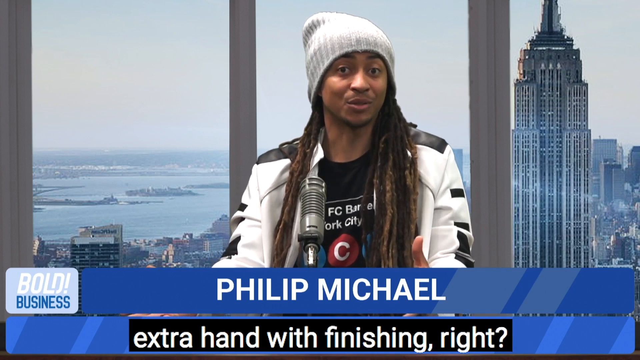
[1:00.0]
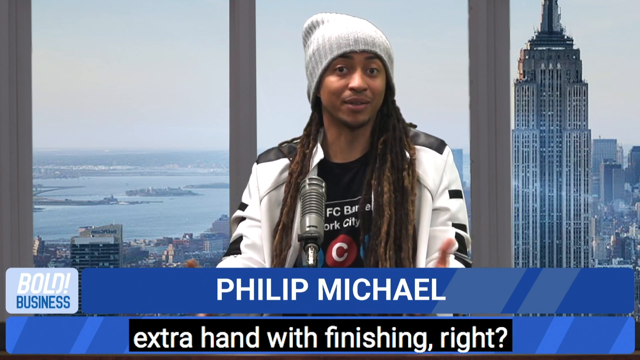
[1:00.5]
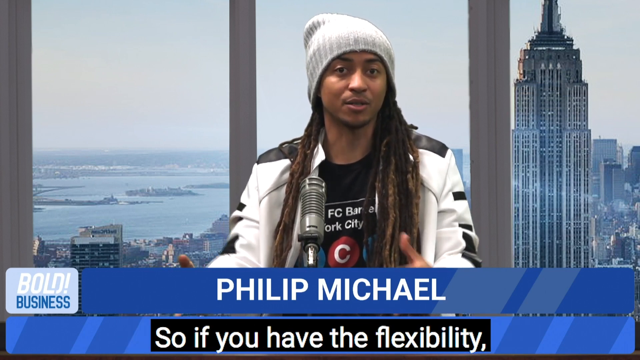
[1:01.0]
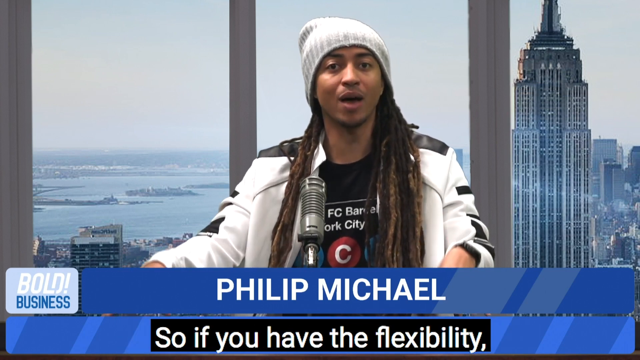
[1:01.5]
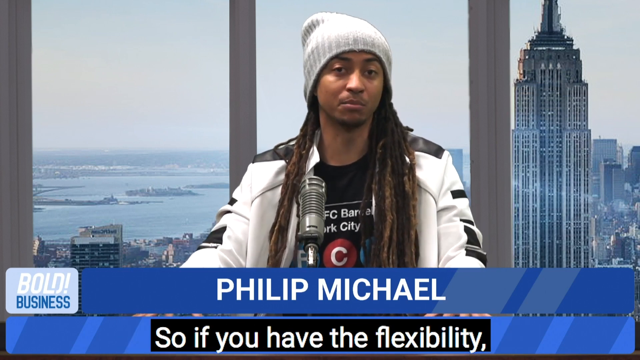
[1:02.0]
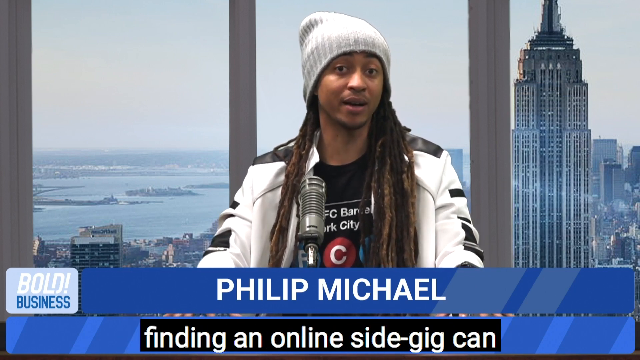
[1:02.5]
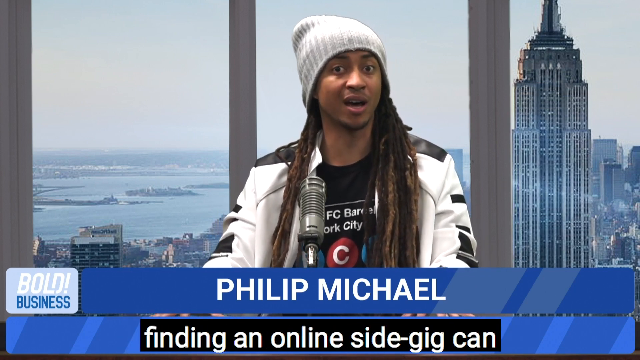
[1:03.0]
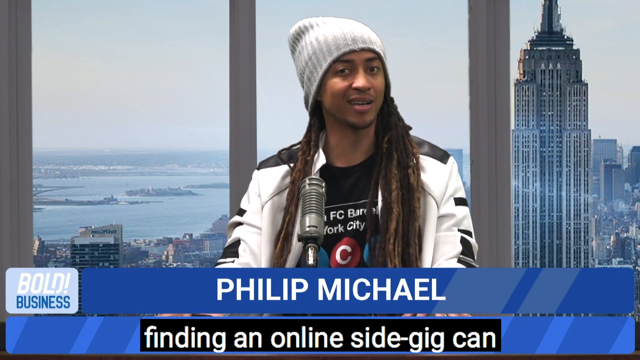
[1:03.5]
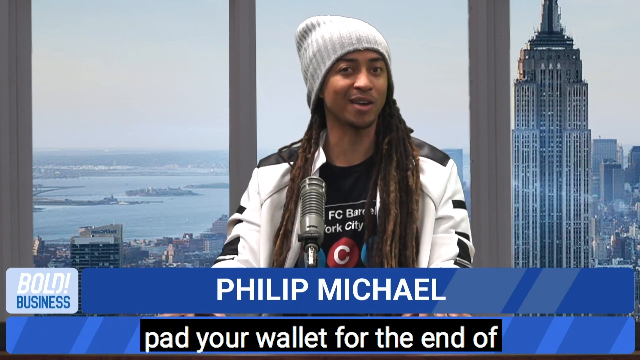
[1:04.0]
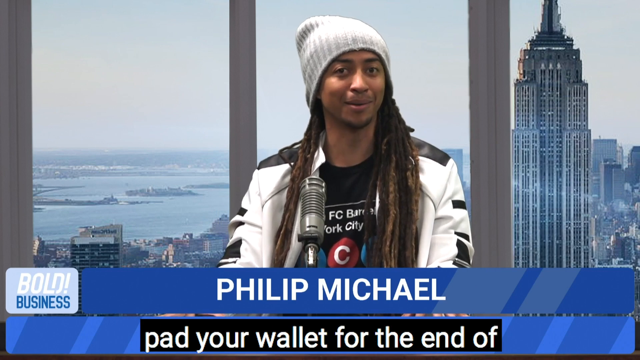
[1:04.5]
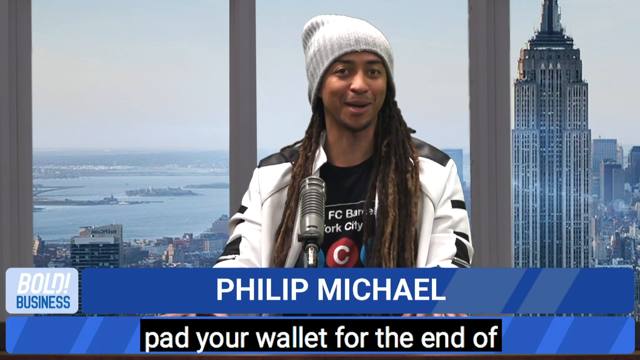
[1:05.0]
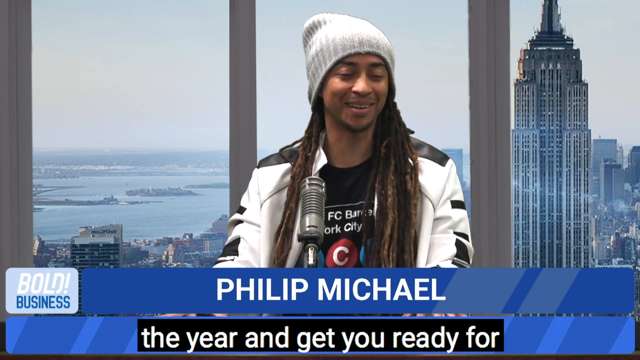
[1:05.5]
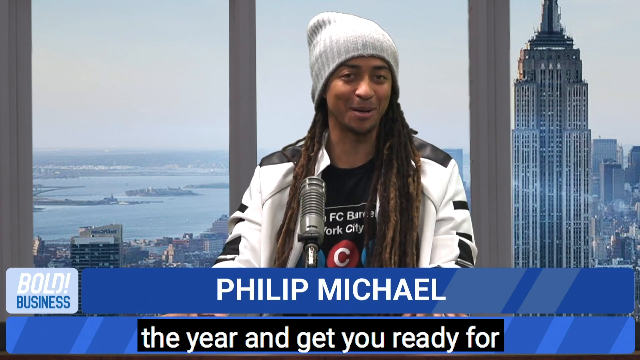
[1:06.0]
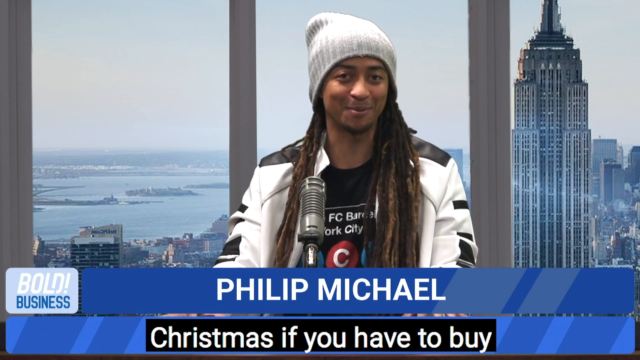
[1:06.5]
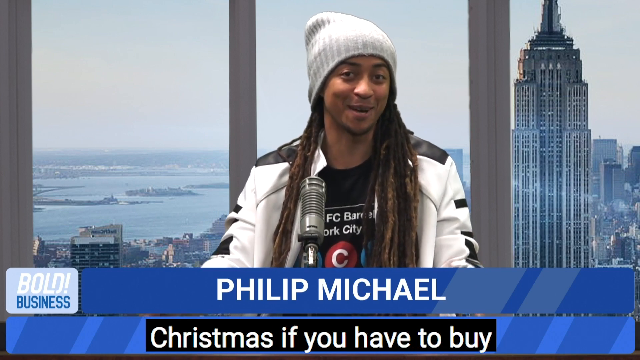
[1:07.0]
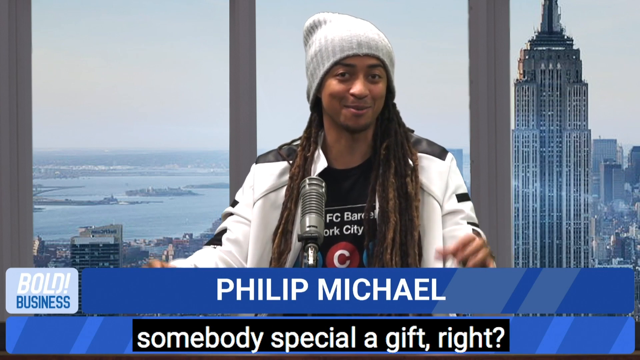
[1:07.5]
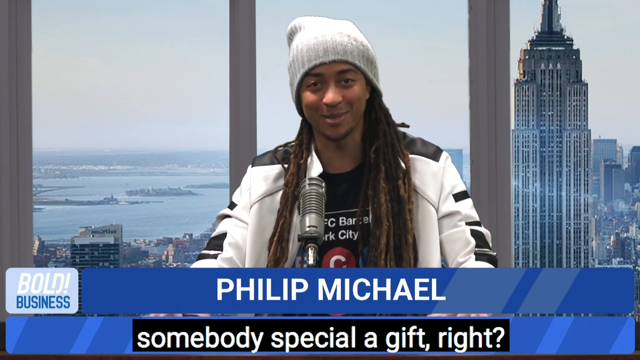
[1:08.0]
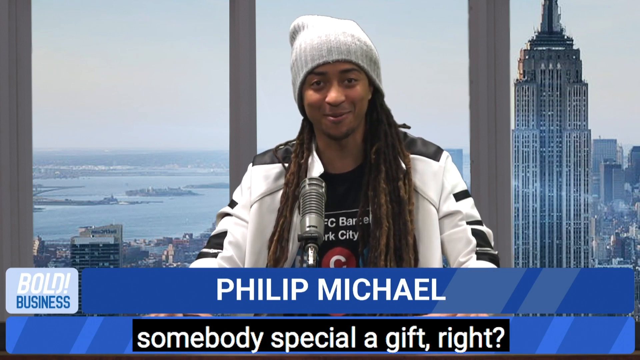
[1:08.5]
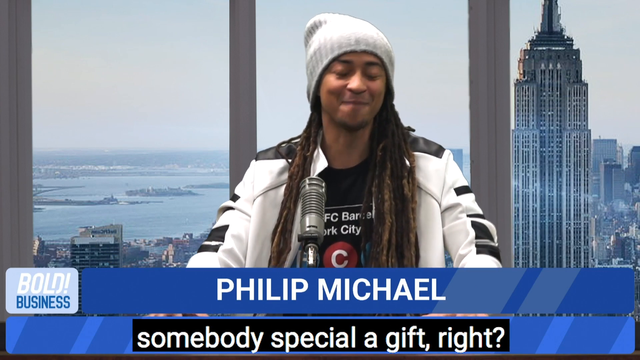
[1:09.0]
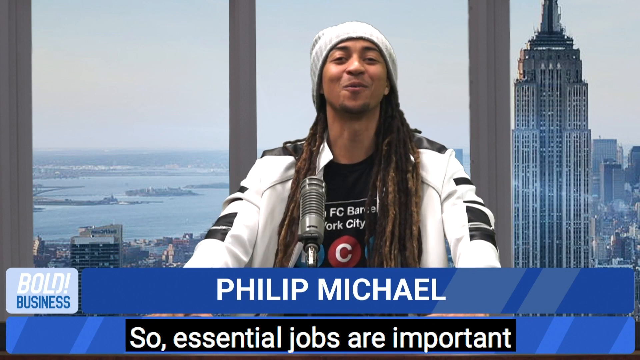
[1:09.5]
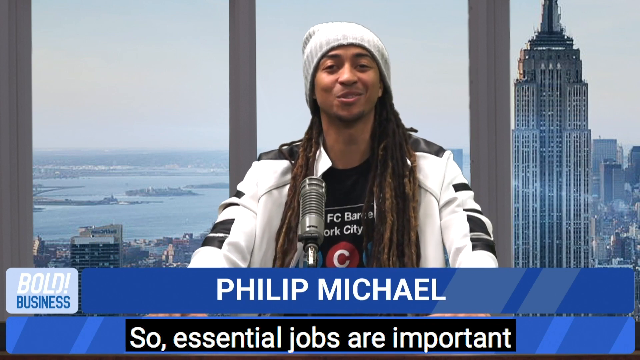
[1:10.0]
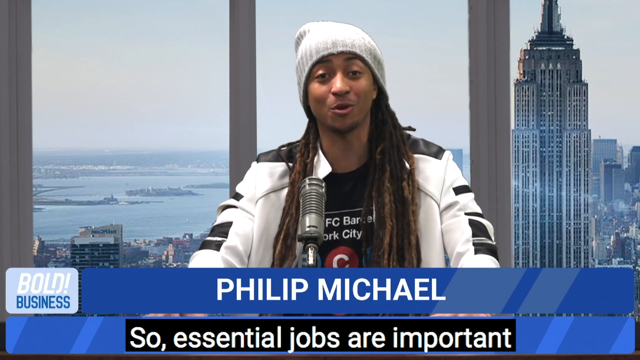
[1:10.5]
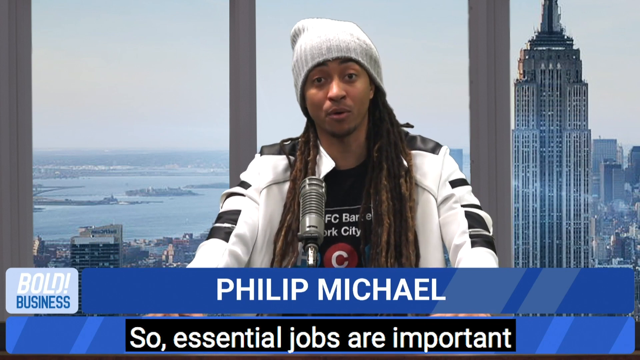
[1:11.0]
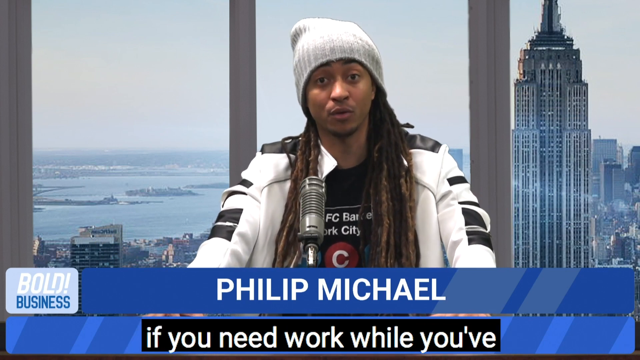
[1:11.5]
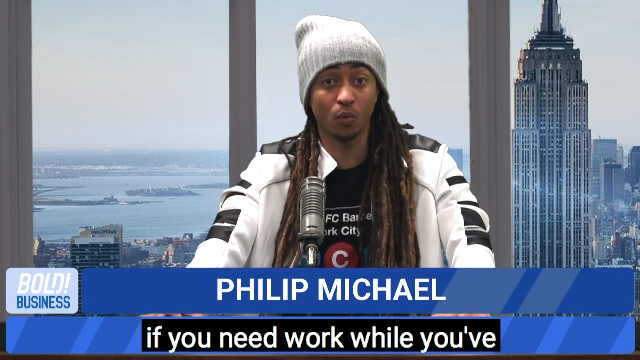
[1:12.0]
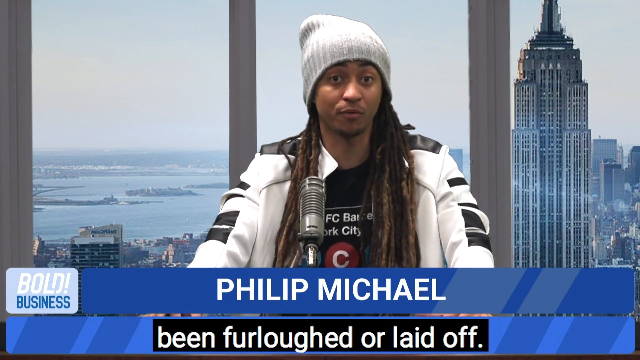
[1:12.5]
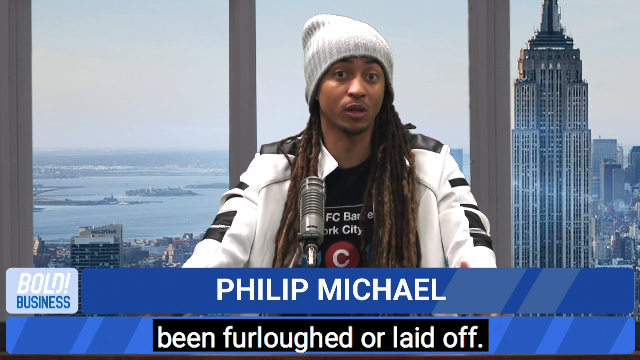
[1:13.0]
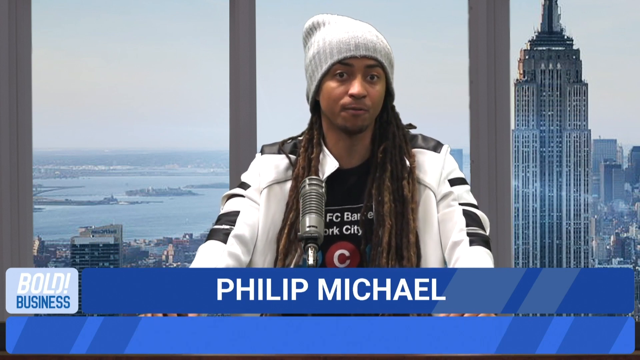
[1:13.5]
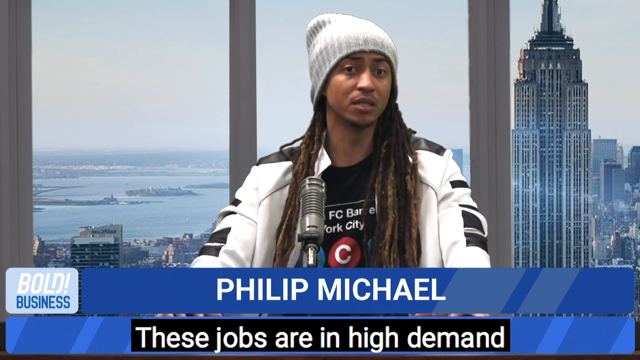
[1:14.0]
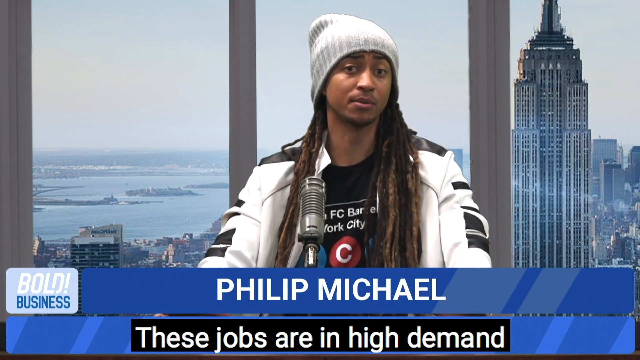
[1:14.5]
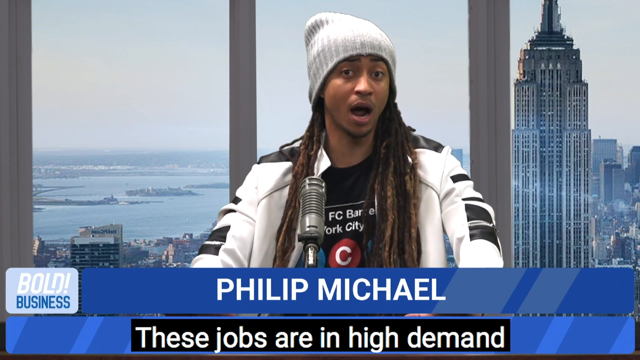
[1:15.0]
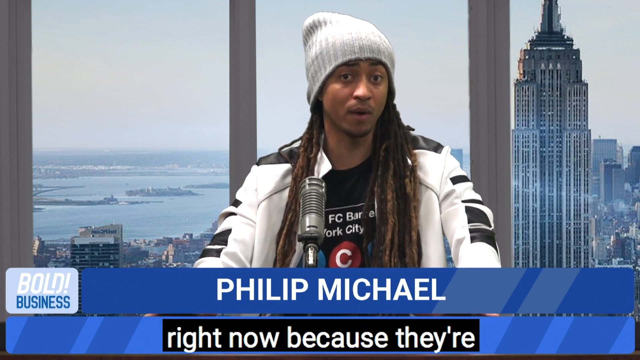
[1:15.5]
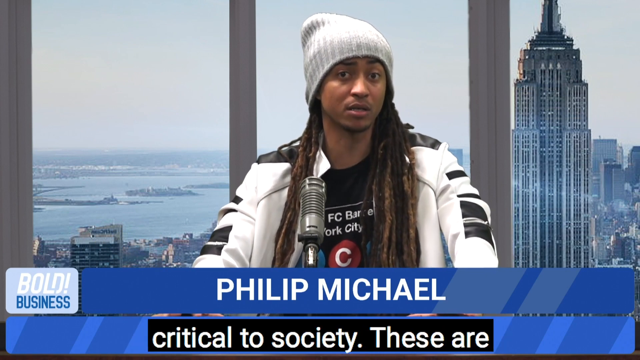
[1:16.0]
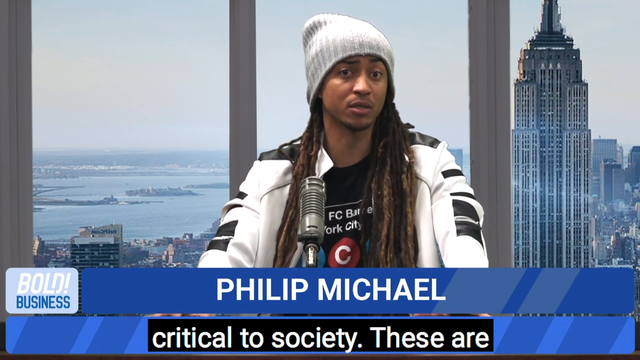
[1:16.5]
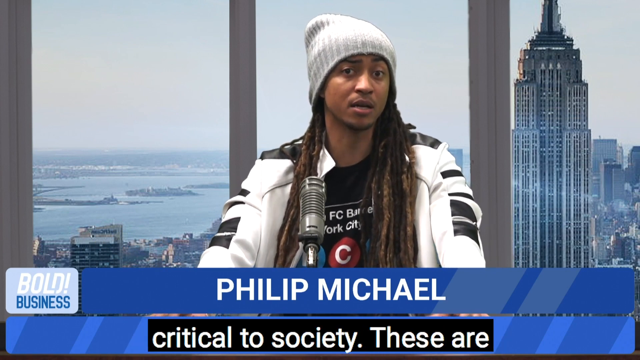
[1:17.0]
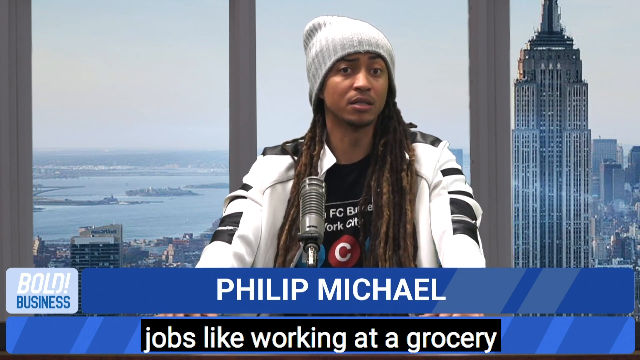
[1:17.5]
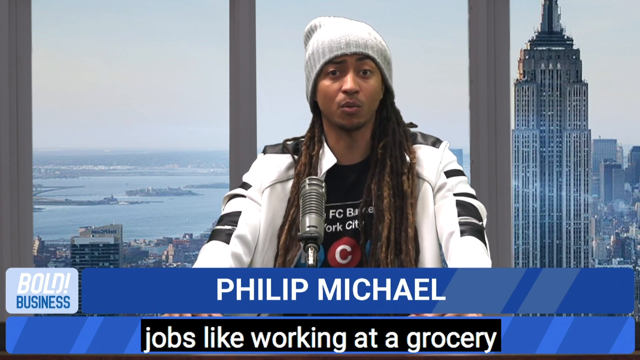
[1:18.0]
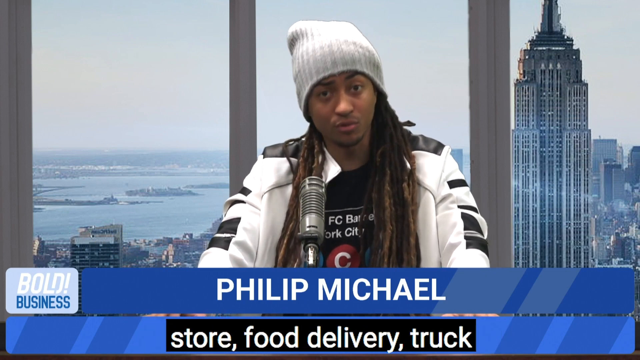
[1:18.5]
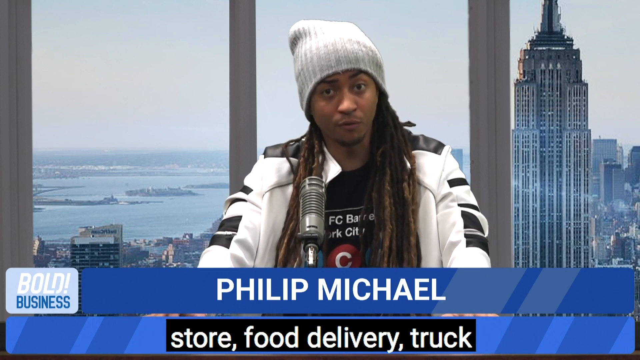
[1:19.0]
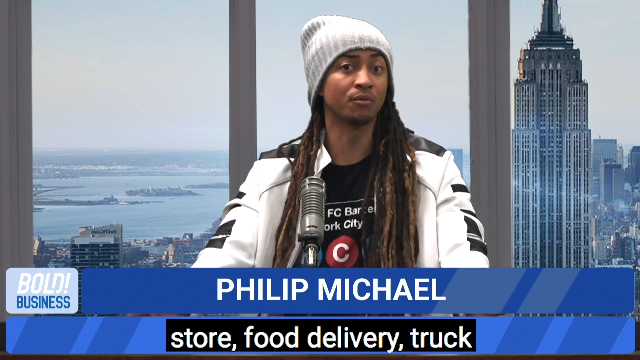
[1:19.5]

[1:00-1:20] Philip Michael continues speaking to his audience, using his hands to gesture. He has a sincere, genuine look on his face with a slight smile, and he raises his eyebrows. He has clear, radiant skin, a light mustache and a baby face, and appears to be well-groomed. His facial expressions are very expressive.